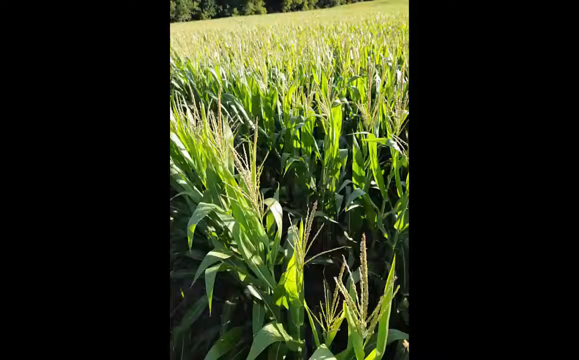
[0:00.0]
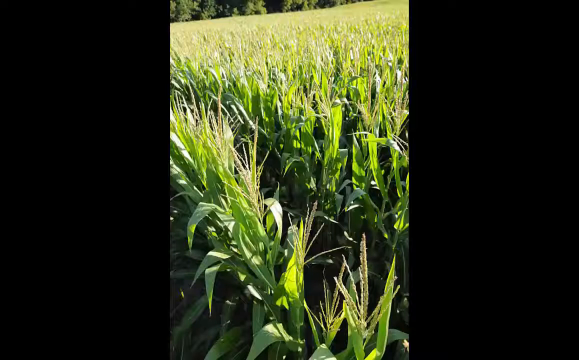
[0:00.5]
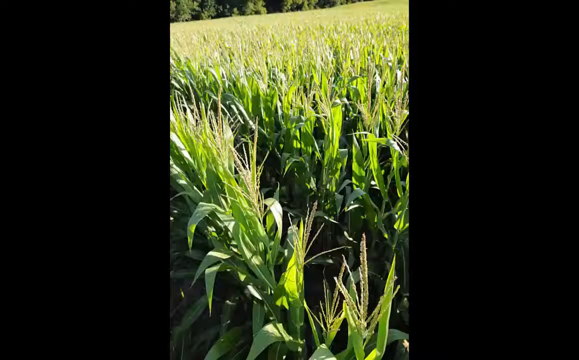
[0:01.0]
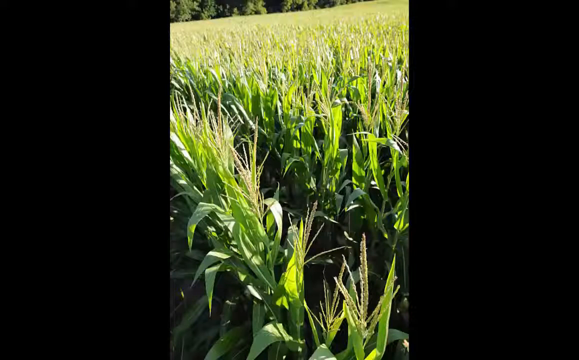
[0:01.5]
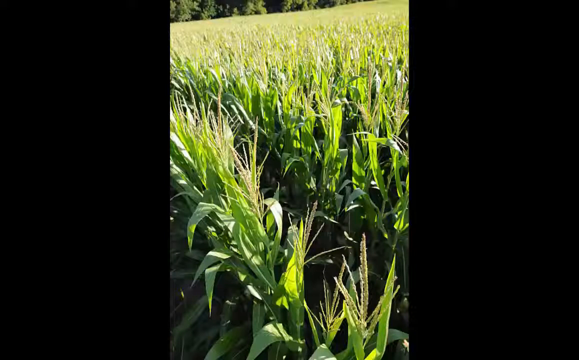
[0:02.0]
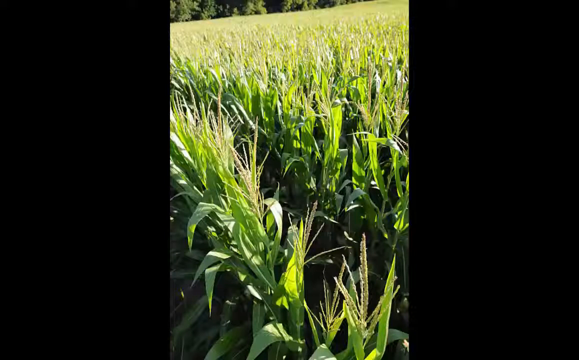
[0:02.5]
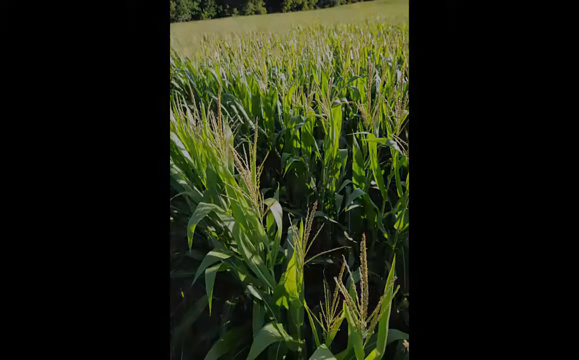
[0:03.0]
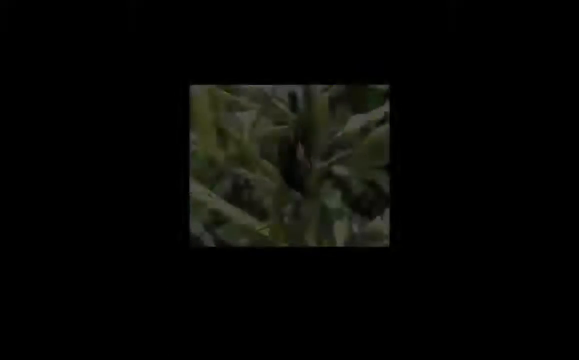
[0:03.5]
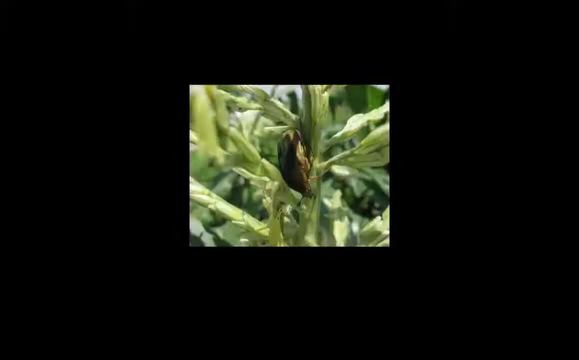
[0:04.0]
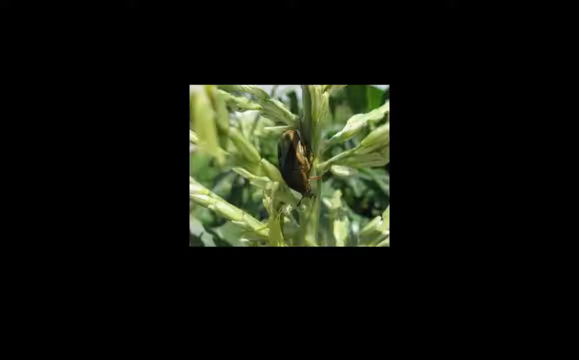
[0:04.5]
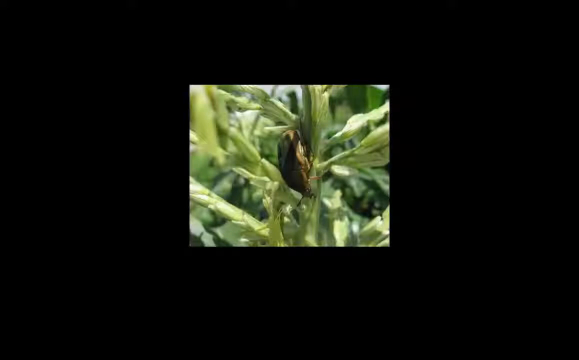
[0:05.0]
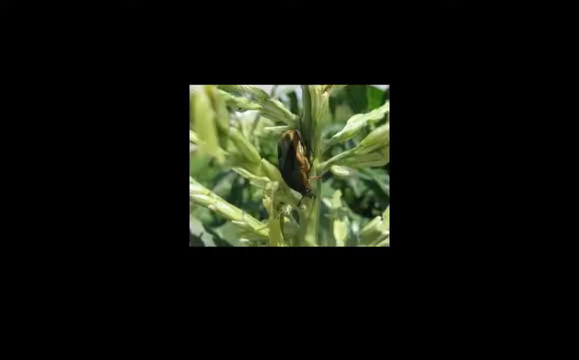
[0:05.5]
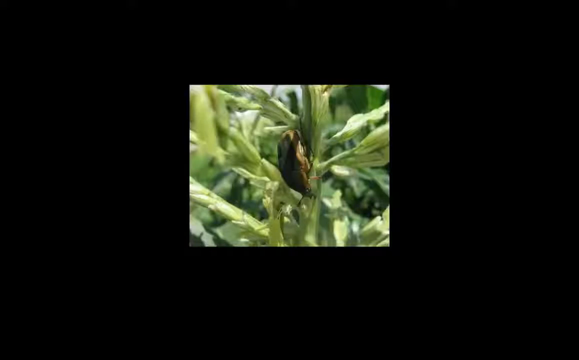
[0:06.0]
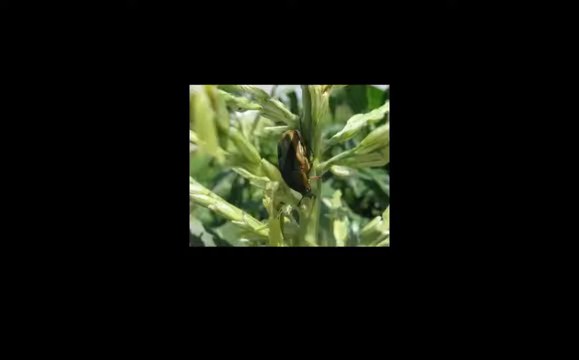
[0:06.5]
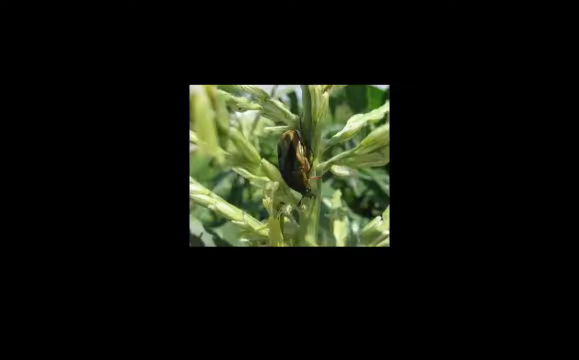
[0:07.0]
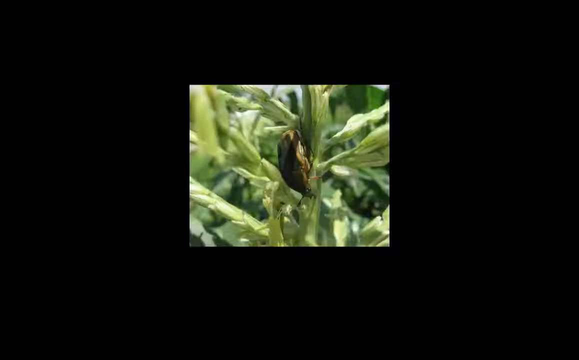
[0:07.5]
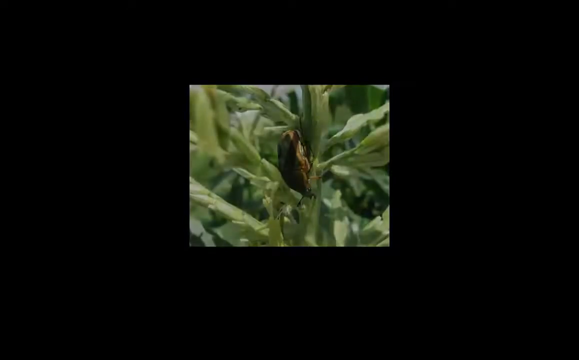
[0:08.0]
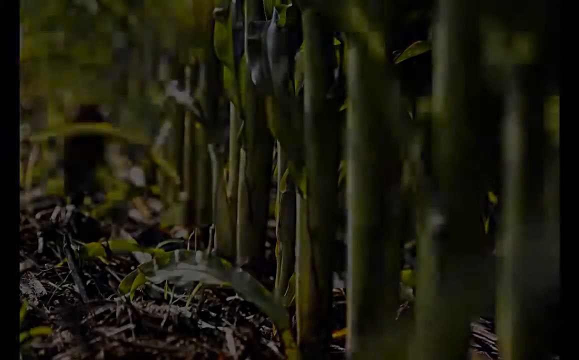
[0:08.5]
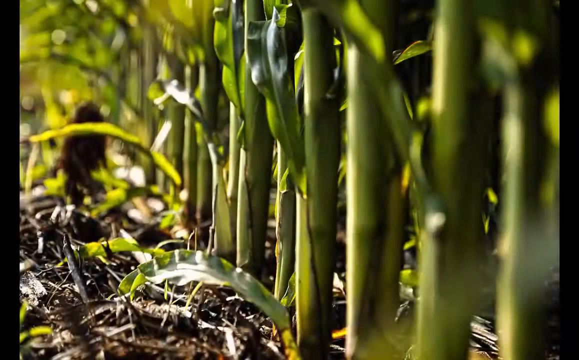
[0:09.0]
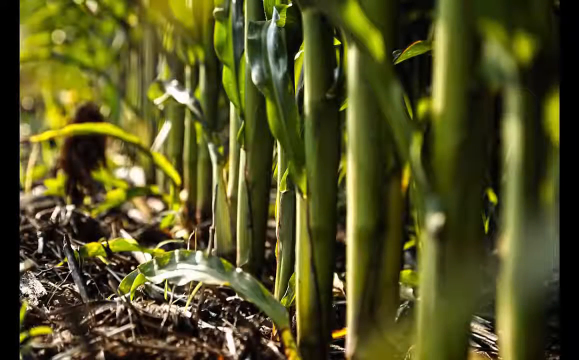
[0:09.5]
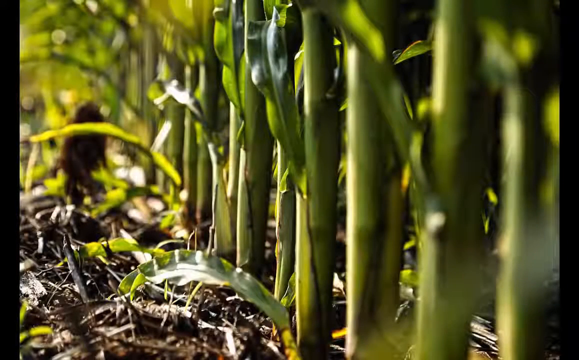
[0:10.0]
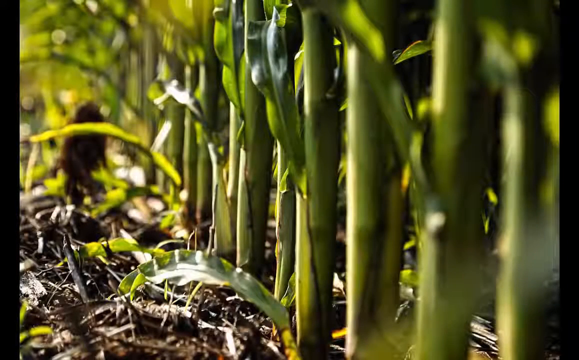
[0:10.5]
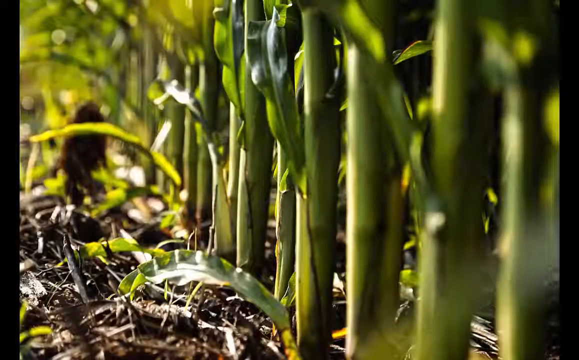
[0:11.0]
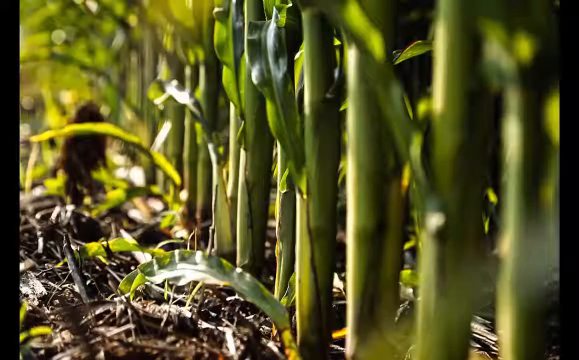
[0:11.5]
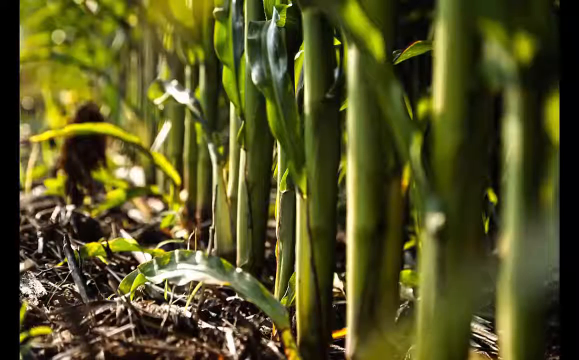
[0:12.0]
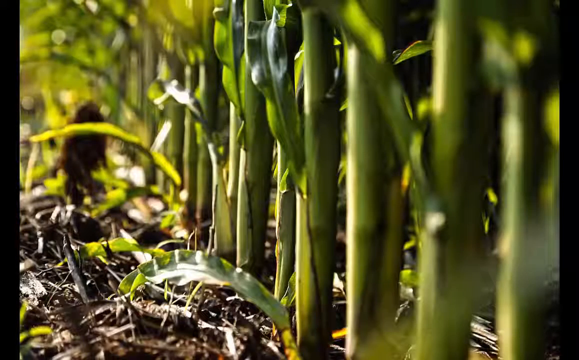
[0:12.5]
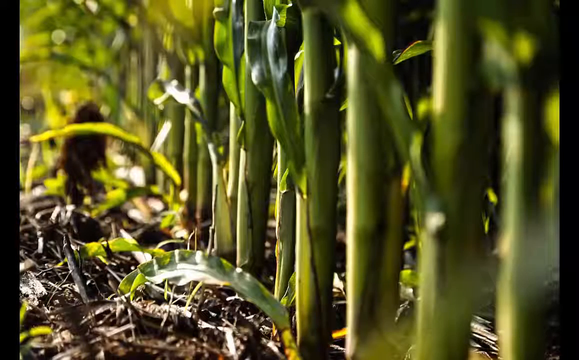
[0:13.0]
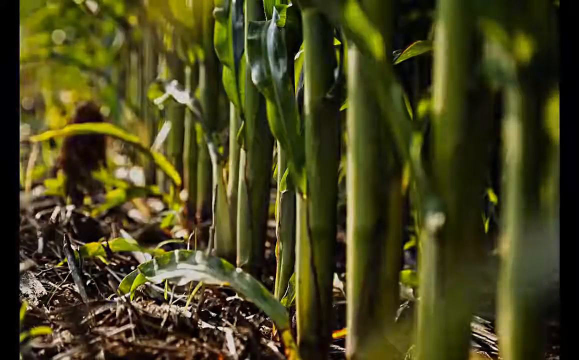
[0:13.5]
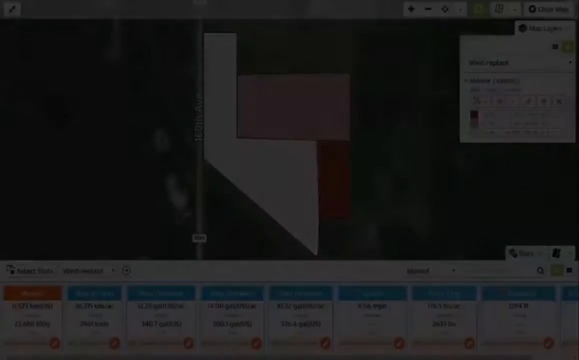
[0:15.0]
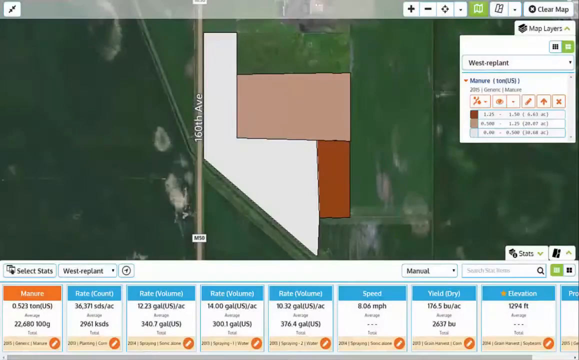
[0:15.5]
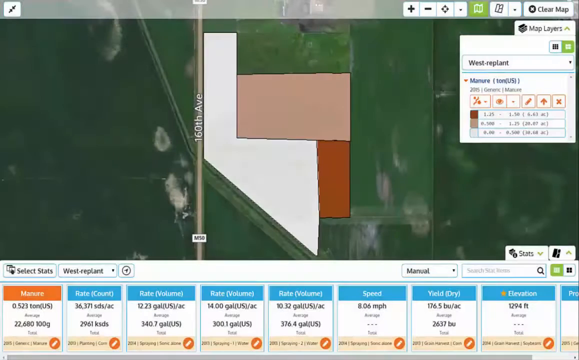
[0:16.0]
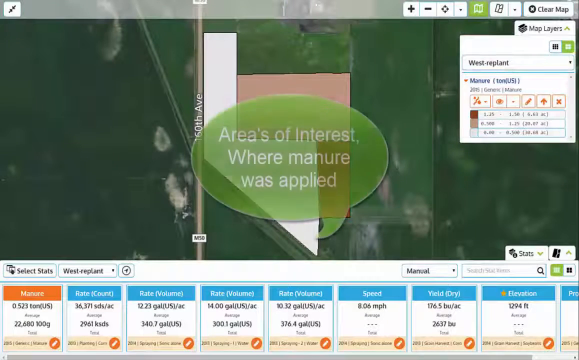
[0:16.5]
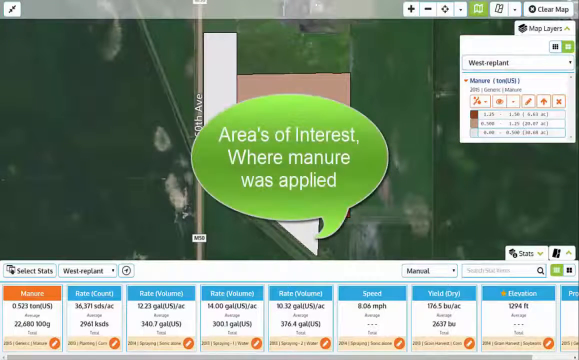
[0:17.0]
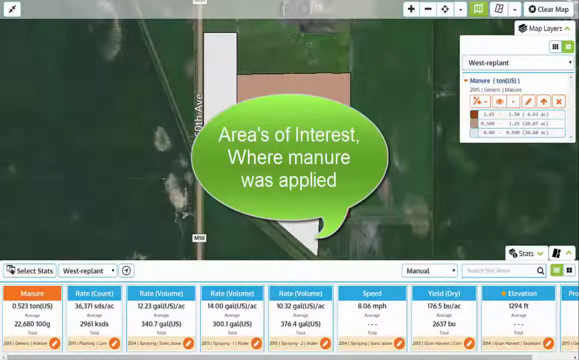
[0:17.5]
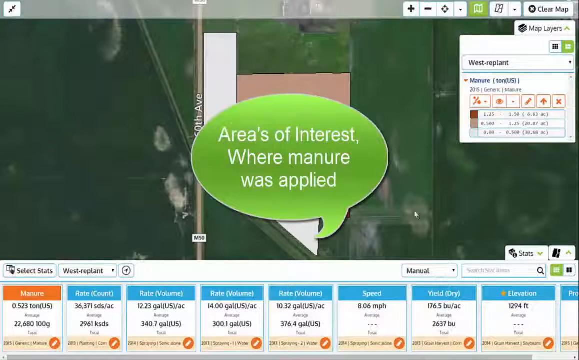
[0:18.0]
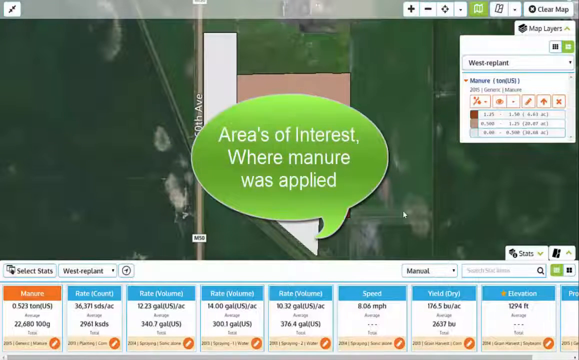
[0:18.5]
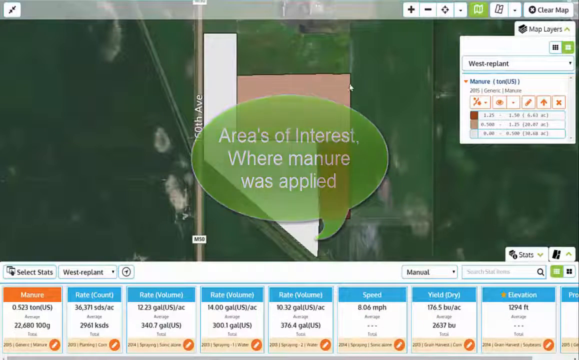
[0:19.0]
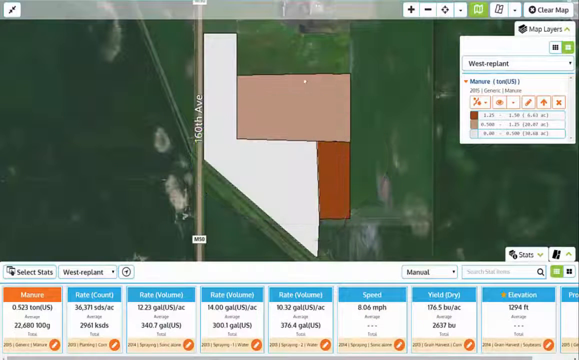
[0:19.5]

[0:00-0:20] Pictures of what appear to be corn stalks fill rows and rows of a field, with no words on the screen. The rows run from the foreground of the picture all the way into the background, and there are some trees on the tree line. In the front the corn stalks are clear, with all of the individual leaves visible. The screen changes to a smaller picture of what appears to be a bug of some sort; it looks kind of big, but the image is very zoomed in, so its size is hard to tell, and it is apparently something found on the corn stalks. Next comes a close-up image of the corn with a row of about 10 clearly defined stalks in the foreground and everything else a little blurry. Then a big screen reads "areas of interest where manure was applied".